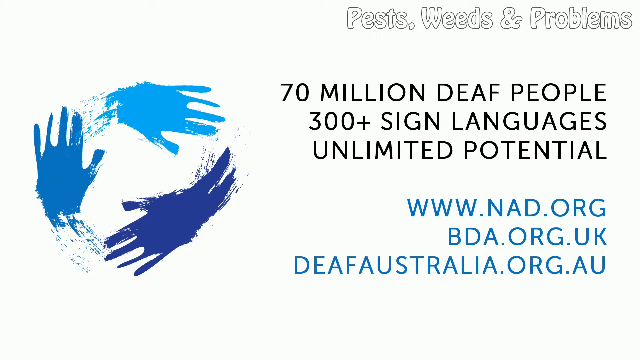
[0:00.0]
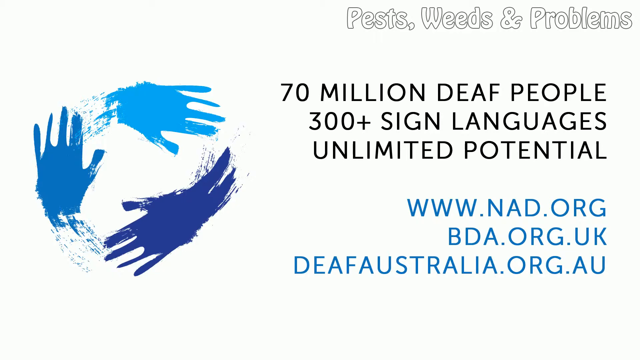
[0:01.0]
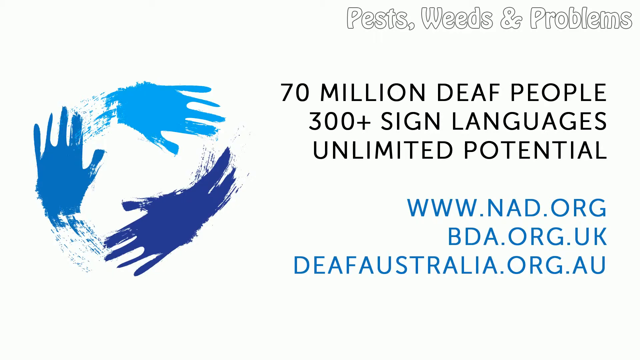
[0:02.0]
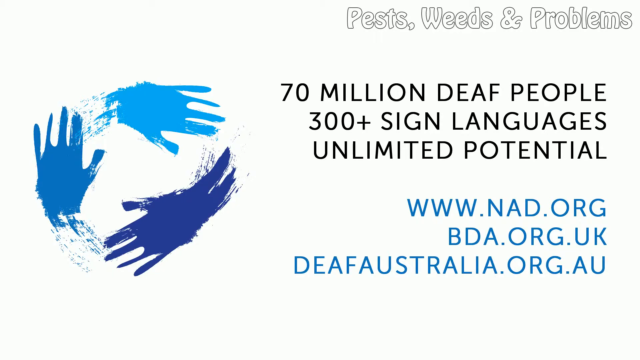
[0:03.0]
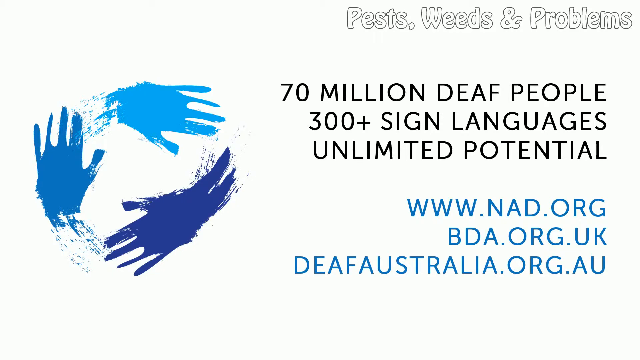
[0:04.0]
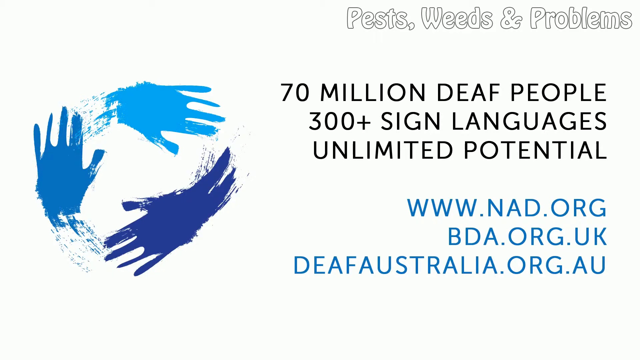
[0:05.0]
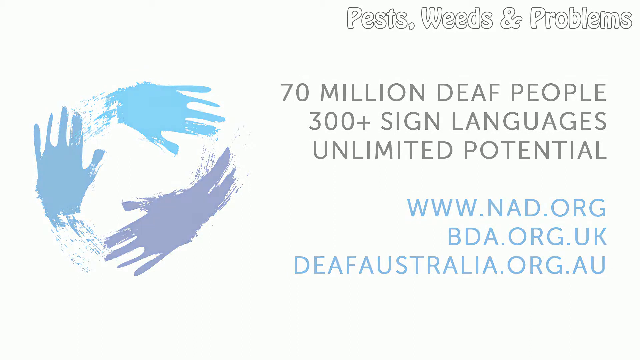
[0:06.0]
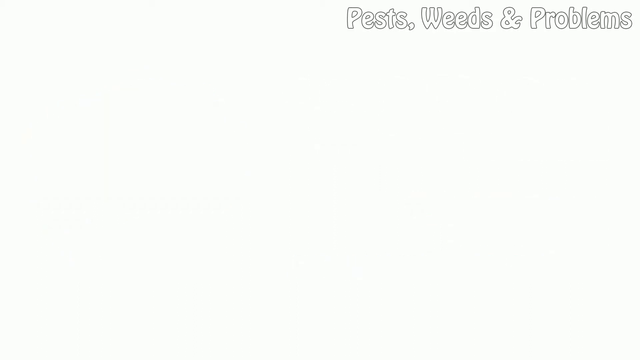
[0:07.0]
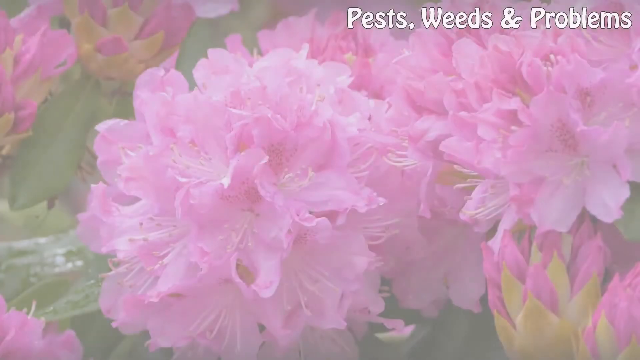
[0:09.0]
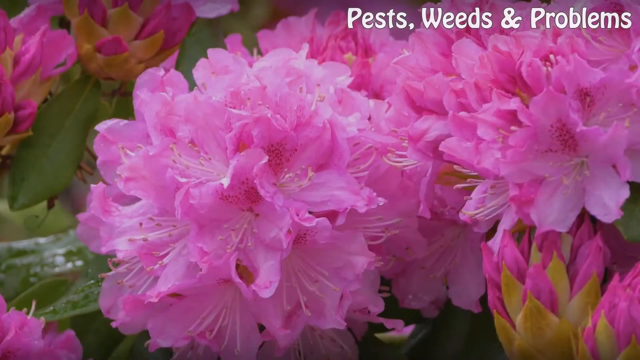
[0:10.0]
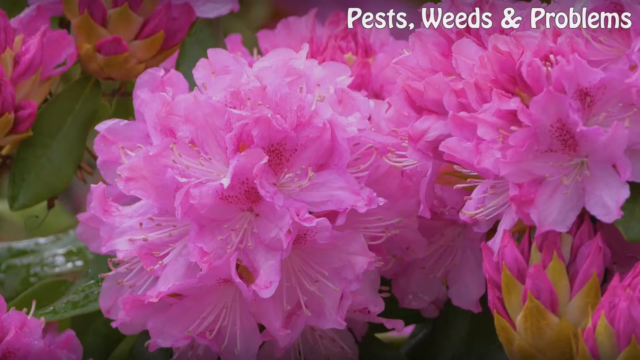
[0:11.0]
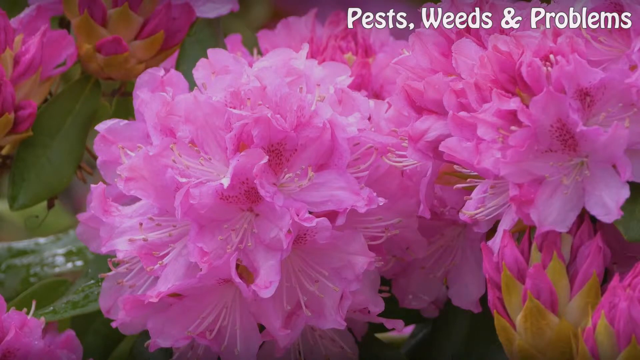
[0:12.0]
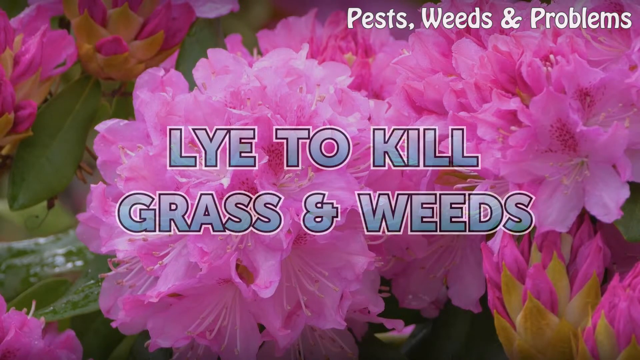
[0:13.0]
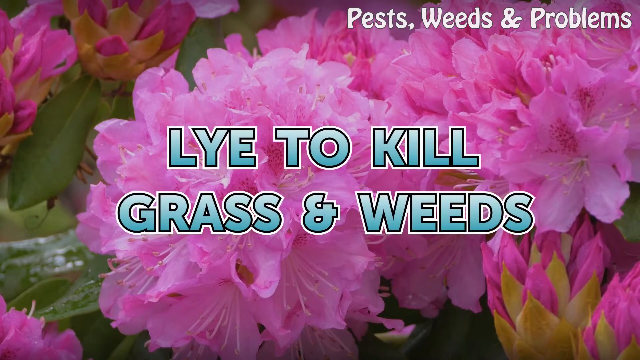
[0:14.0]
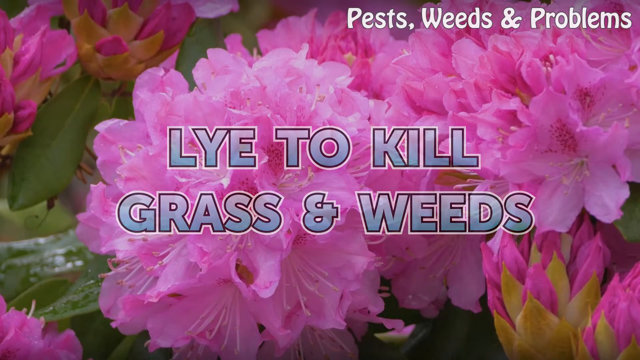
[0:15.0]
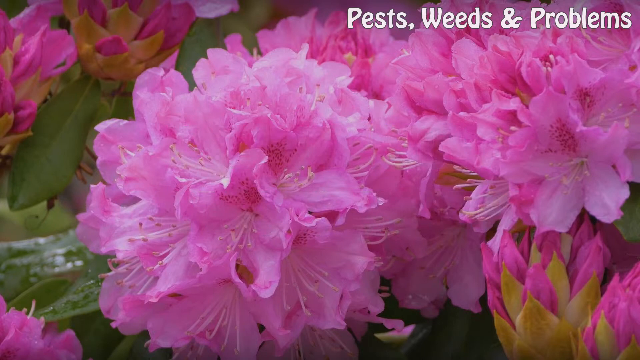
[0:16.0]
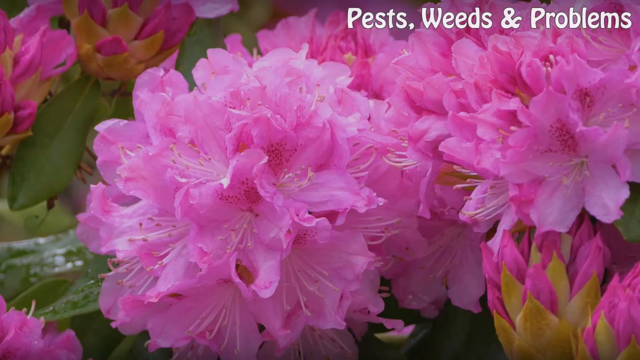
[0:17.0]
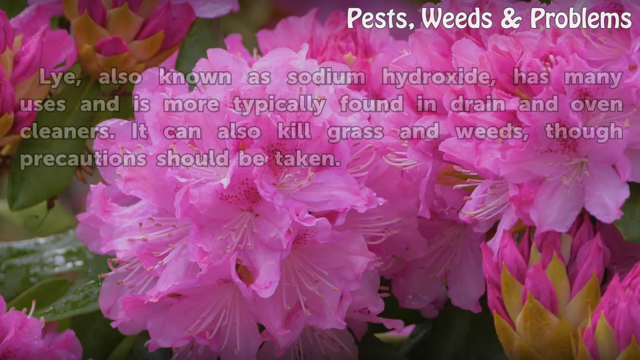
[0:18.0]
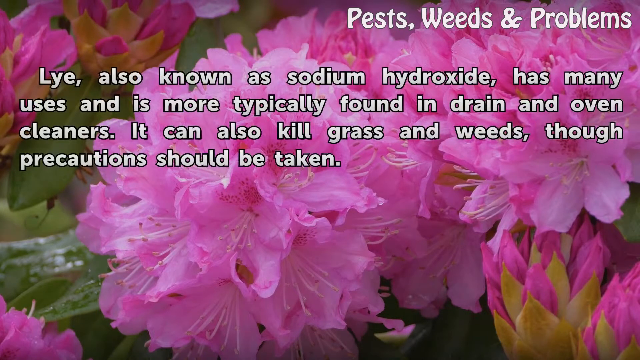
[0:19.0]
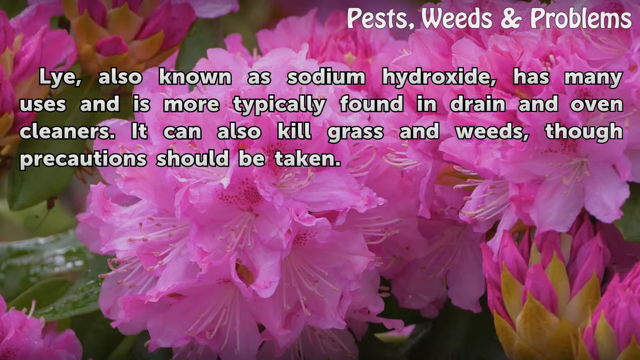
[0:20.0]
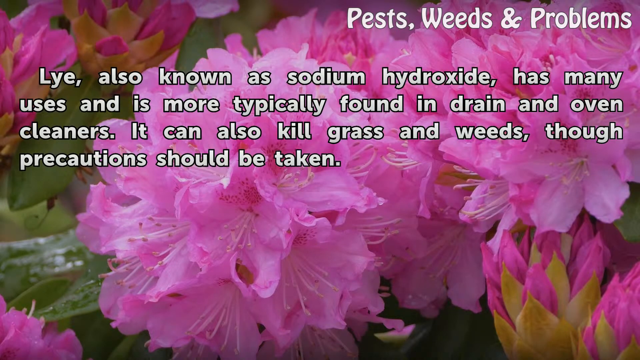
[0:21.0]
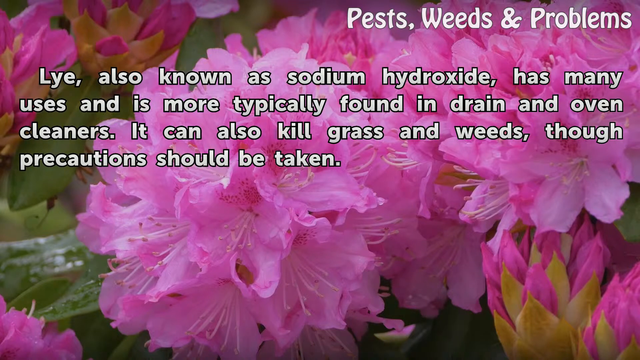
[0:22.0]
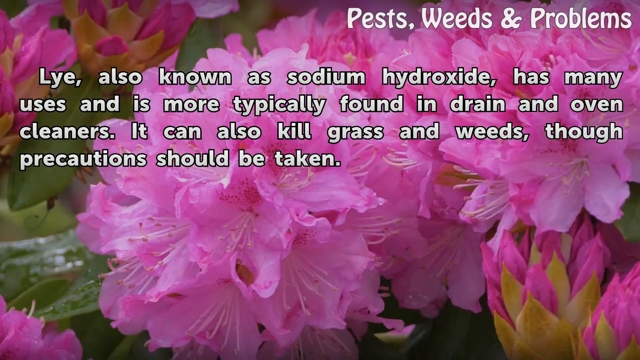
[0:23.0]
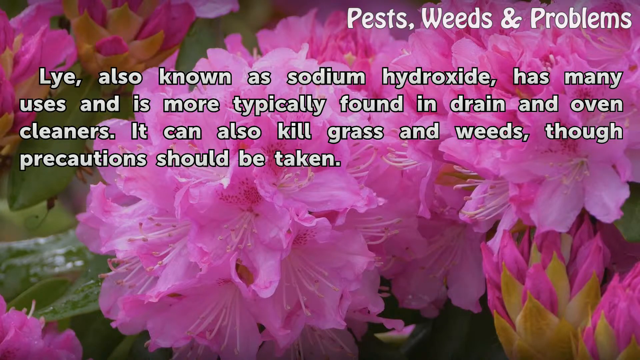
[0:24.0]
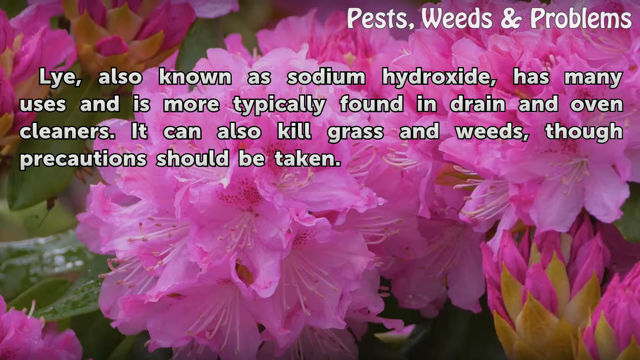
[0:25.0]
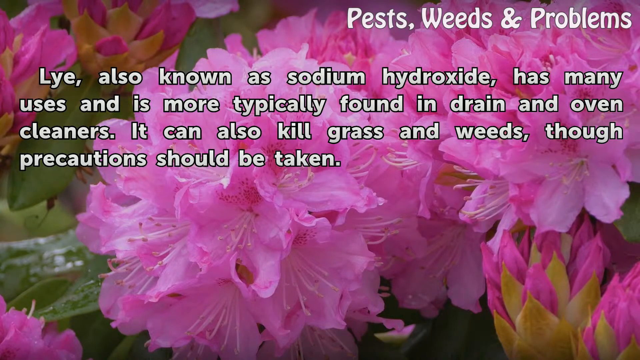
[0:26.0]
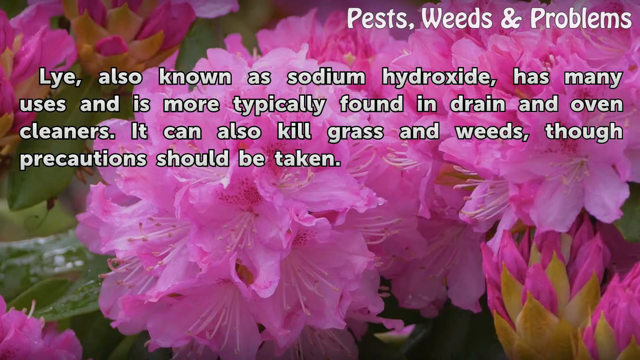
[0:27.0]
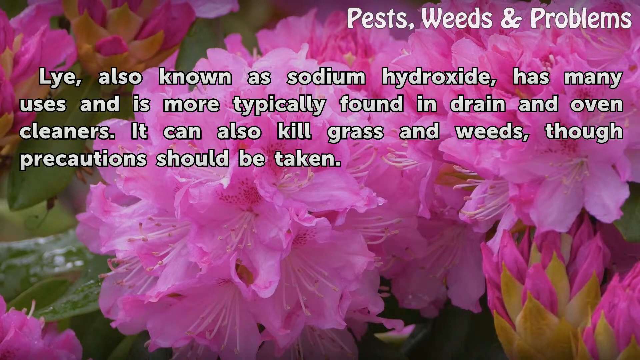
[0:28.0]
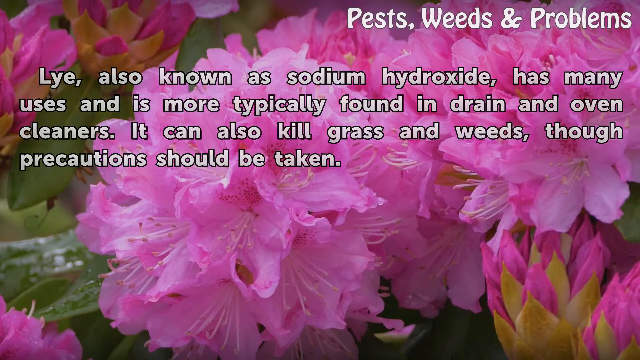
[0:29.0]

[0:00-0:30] The video opens on a white background with handprints on the left side forming a three-handprint logo in the shape of a circle, in light, darker and dark blue. In the top right corner is text with just a black outline reading "Pests, Weeds, and Problems," likely a logo or the title of the video series. On the right side of the screen, black text reads "70 million deaf people, 300 plus sign languages, unlimited potential," and underneath it three websites are presented in blue. The background fades completely to white before an image of a zoomed-in, blossoming pink flower appears. The Pests, Weeds, and Problems logo is in the top right corner, and blue block letters fade in reading "Lye to kill grass and weeds." This text fades away and is replaced by indented white text with a black border along the top of the screen, reading "Lye, also known as sodium hydroxide, has many uses and is more typically found in drain and oven cleaners. It can also kill grass and weeds, though precautions should be taken." The text takes up approximately the top half of the screen before fading away.